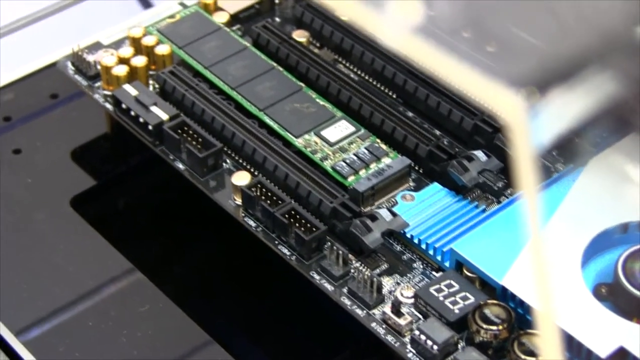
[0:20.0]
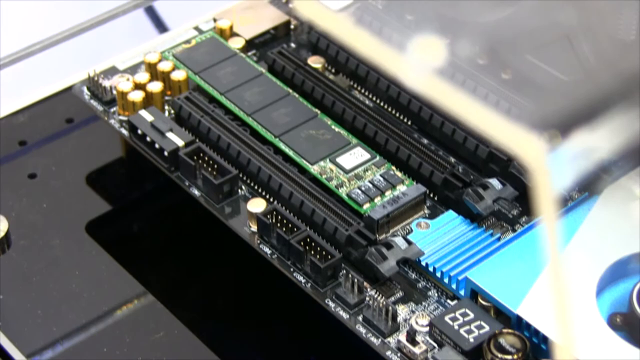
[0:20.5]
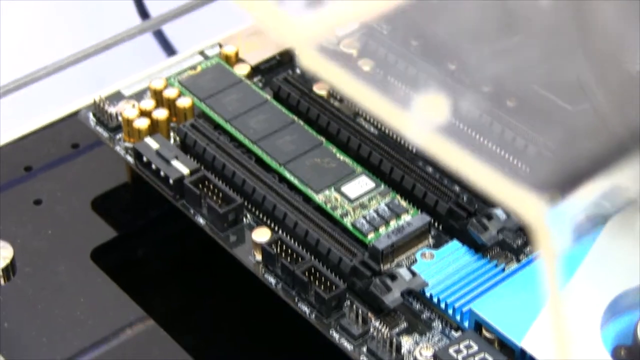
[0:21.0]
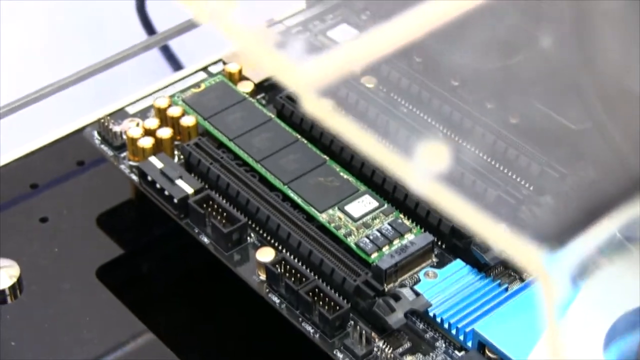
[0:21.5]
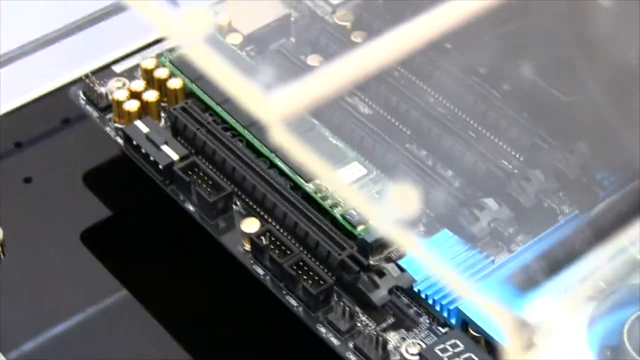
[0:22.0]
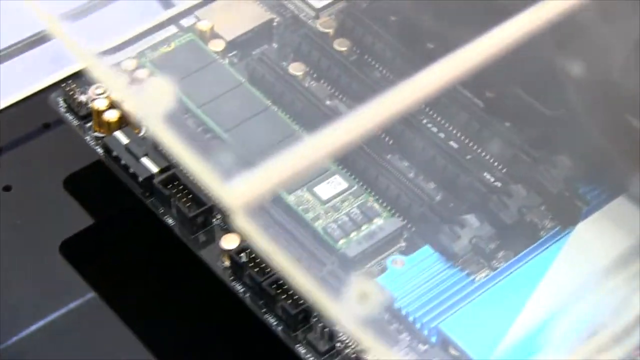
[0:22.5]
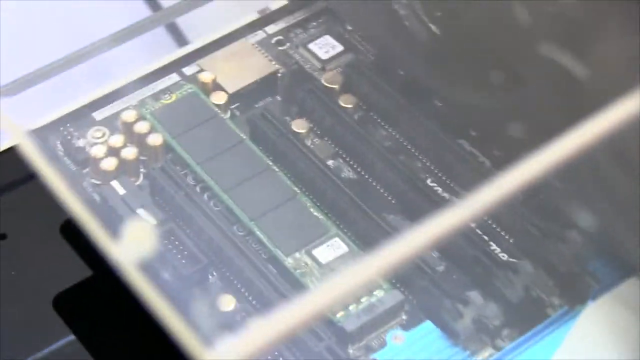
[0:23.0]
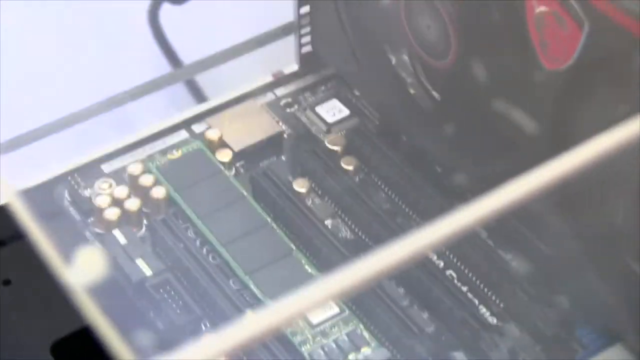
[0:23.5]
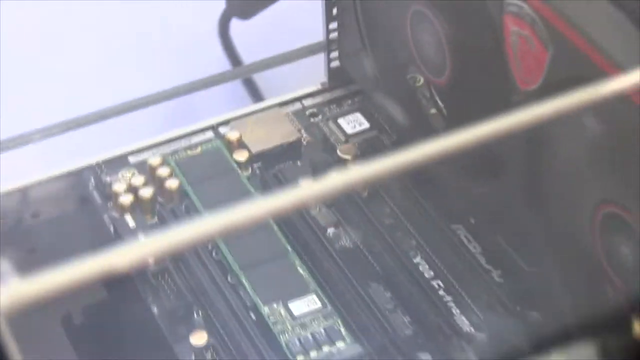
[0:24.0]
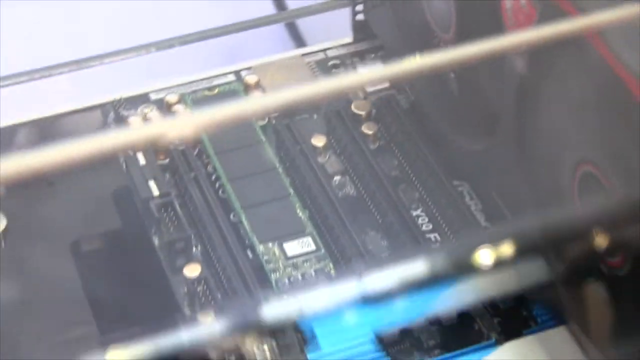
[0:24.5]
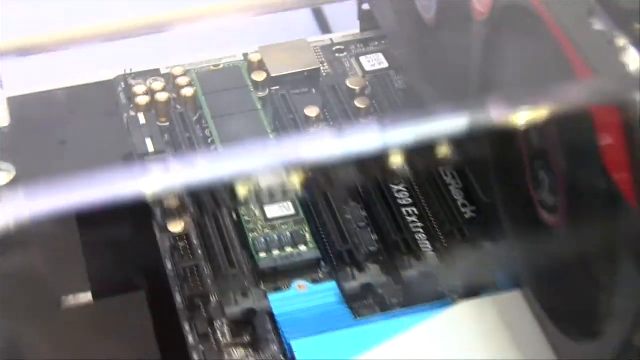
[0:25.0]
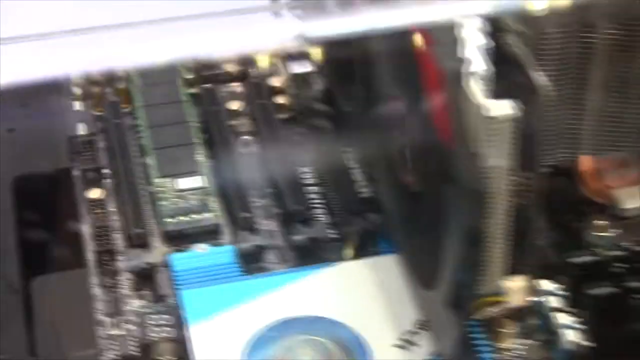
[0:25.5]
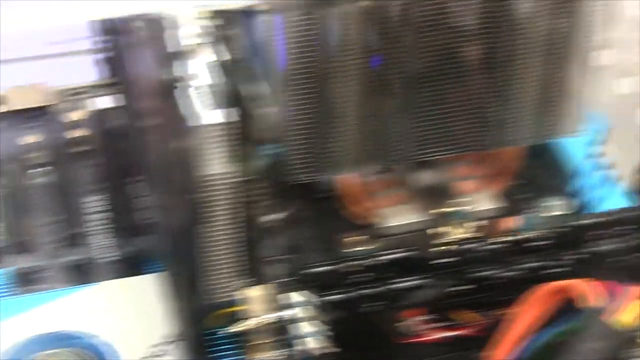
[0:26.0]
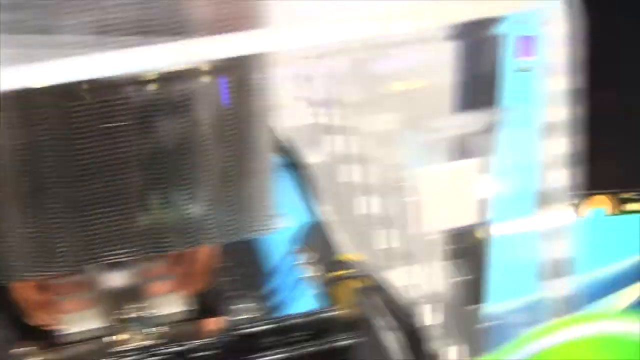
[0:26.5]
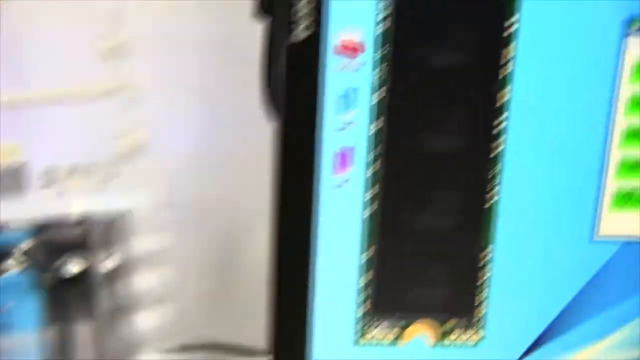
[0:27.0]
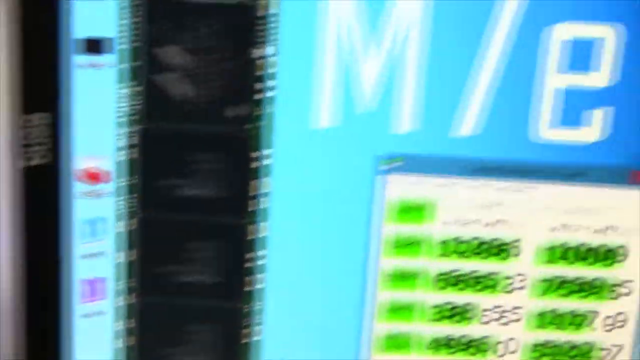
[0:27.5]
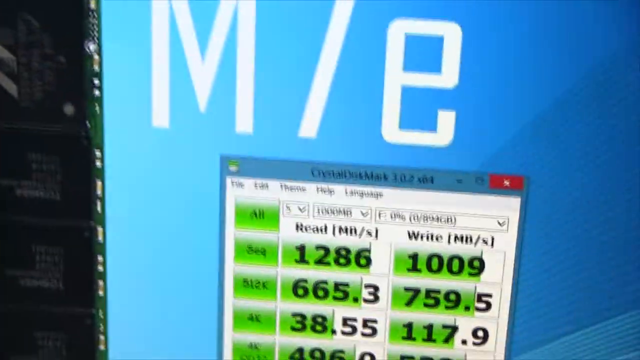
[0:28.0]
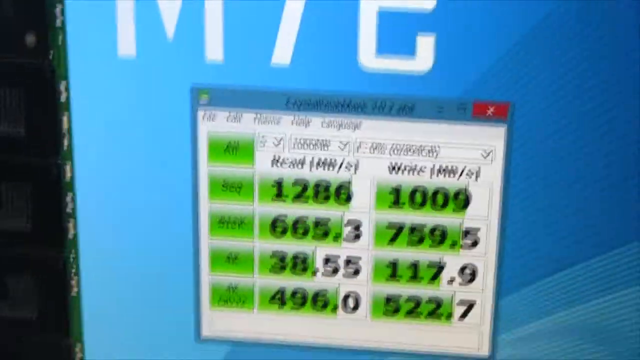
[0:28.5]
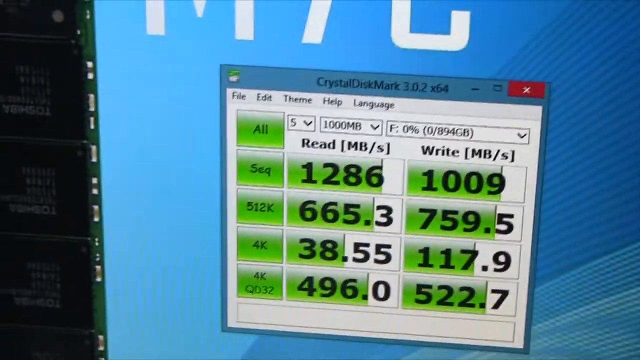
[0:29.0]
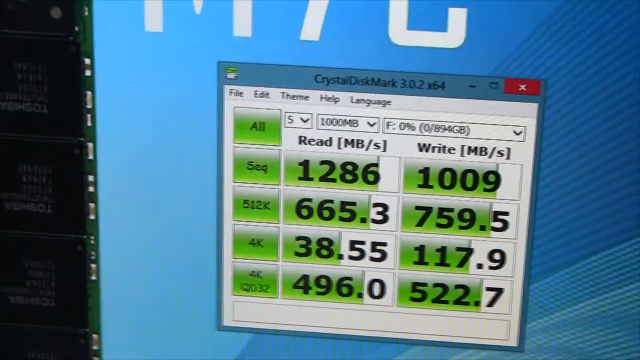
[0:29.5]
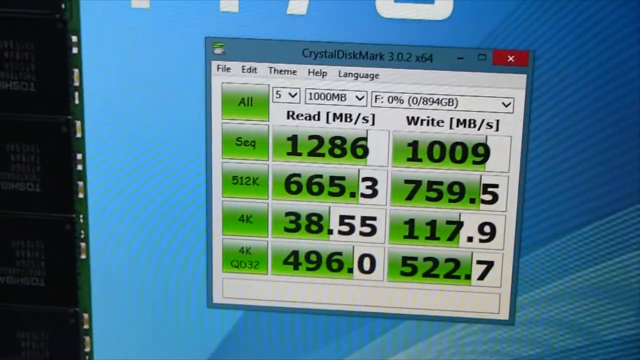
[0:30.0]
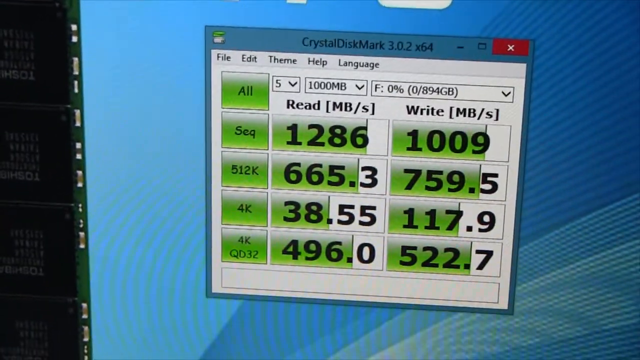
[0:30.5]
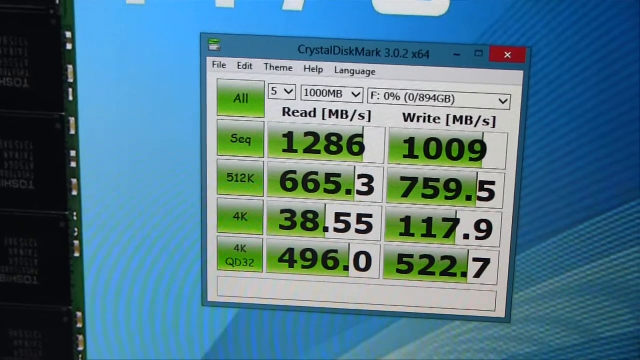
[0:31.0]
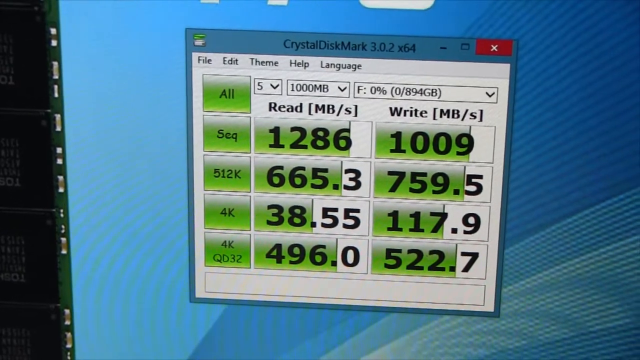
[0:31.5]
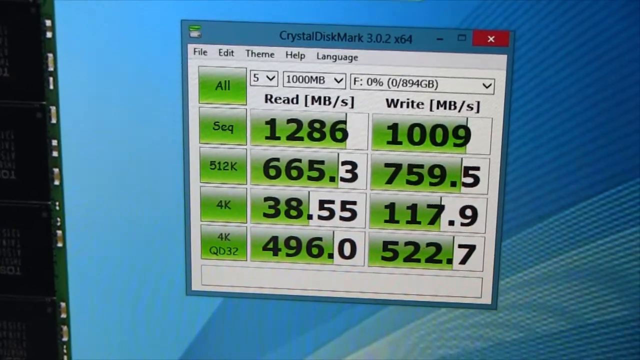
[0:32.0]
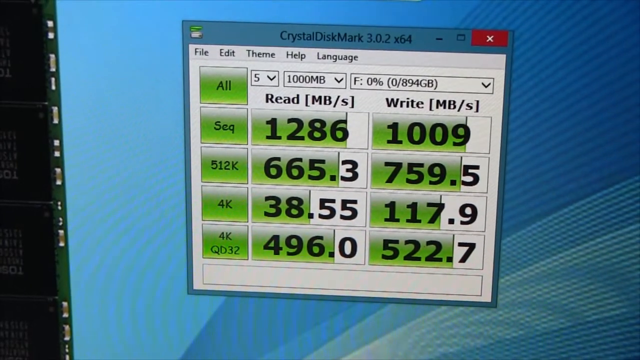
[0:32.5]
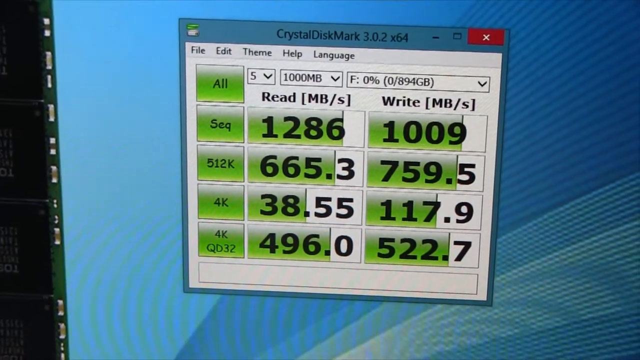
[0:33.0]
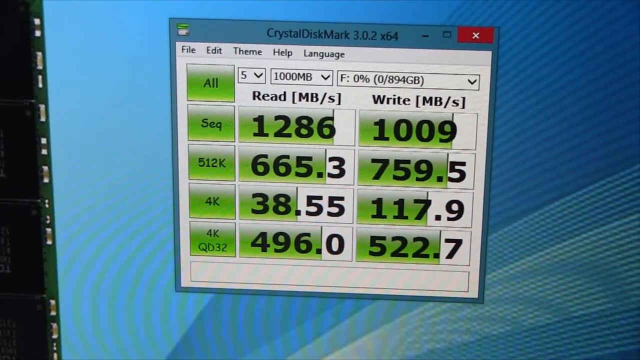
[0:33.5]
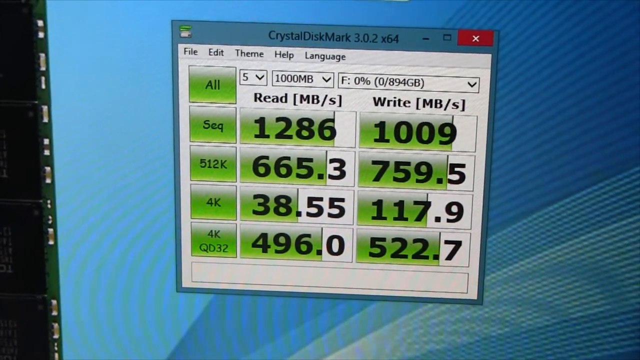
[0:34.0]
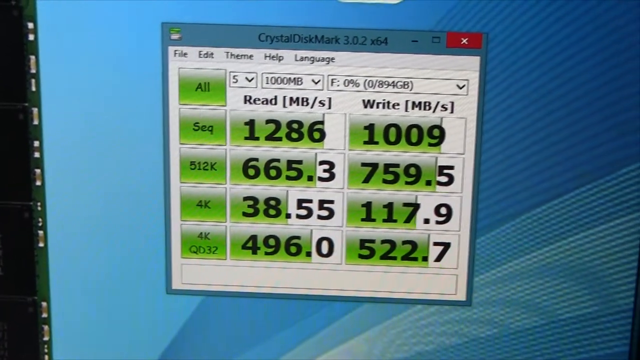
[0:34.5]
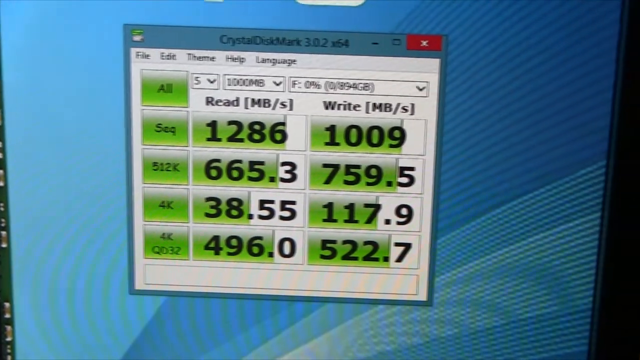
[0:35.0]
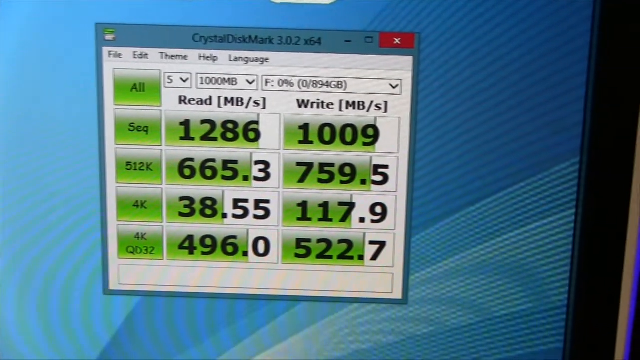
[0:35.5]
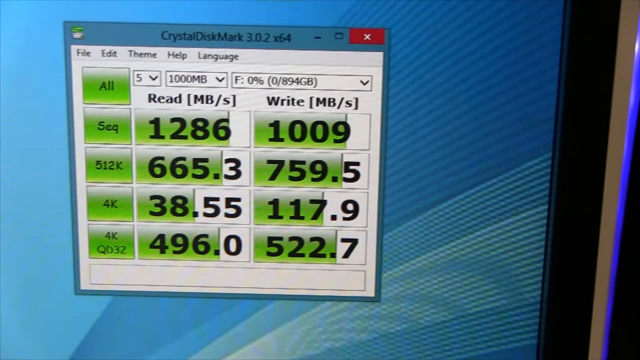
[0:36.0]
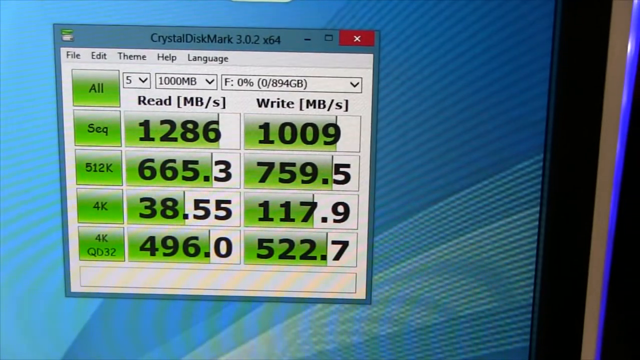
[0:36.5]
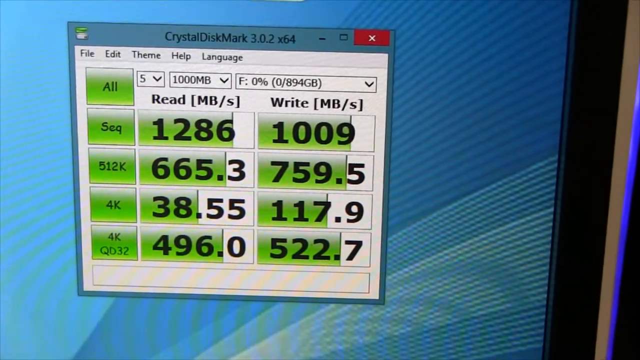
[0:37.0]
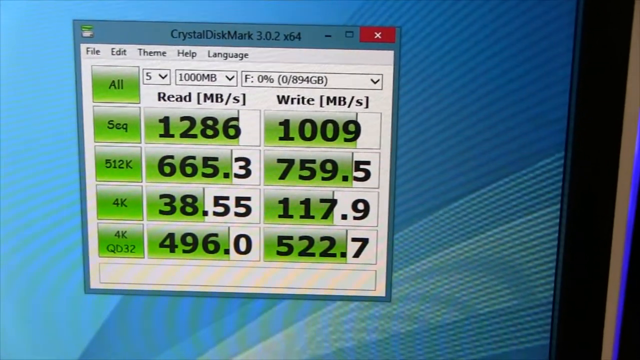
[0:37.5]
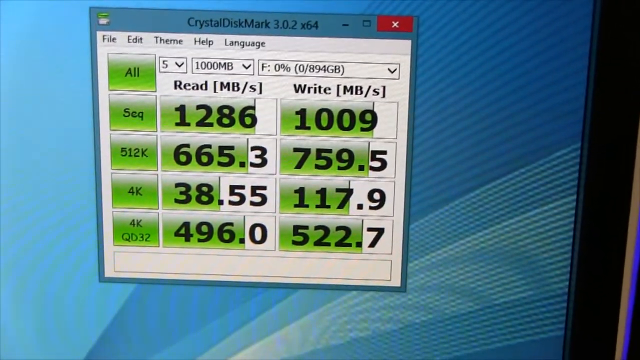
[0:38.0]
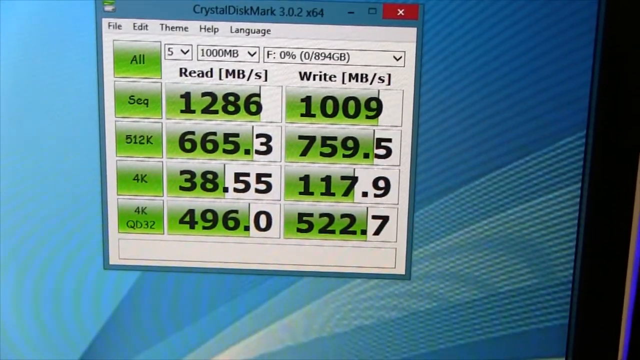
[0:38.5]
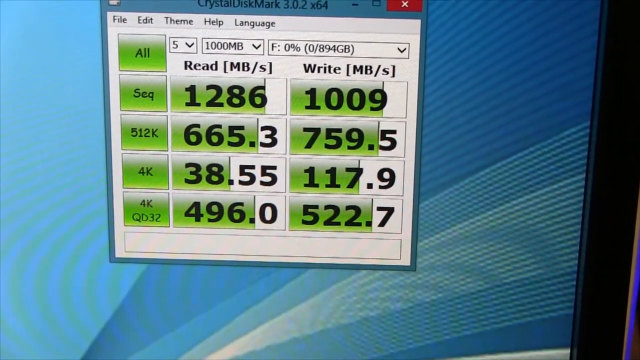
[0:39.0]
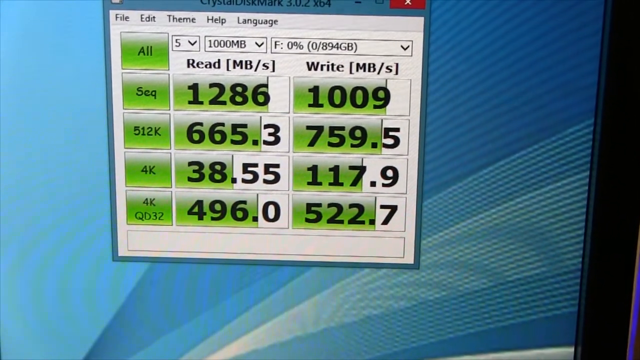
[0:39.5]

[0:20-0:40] The camera moves away from the motherboard, zooming in and out to show the other components, and then lands on the computer monitor. On the screen, a Crystal Disk Mark pop-up window shows "3.02 kHz x 64 bits" along with different sequences and numbers showing the speeds of the storage devices as they read and write. Different speeds are displayed for the SSD being tested, with read and write values in MB, sequential performance and 4k tests. The window's menu shows "file, edit, theme, help" and "language".